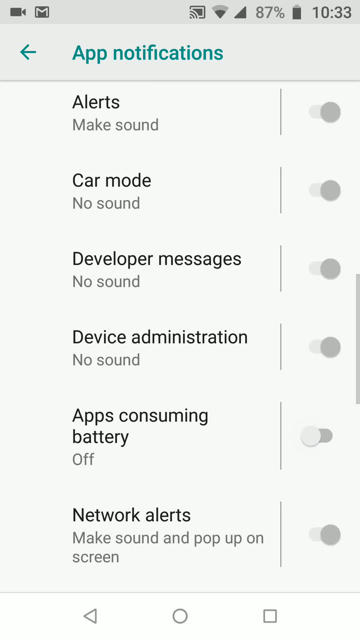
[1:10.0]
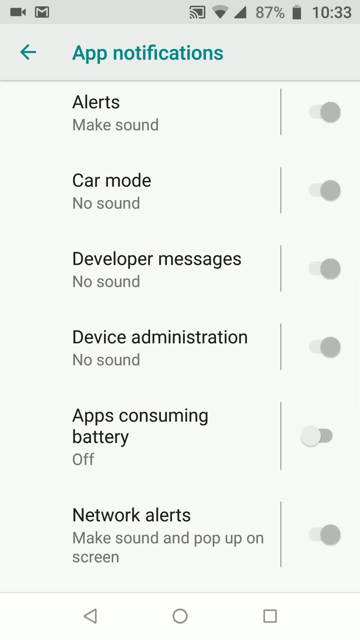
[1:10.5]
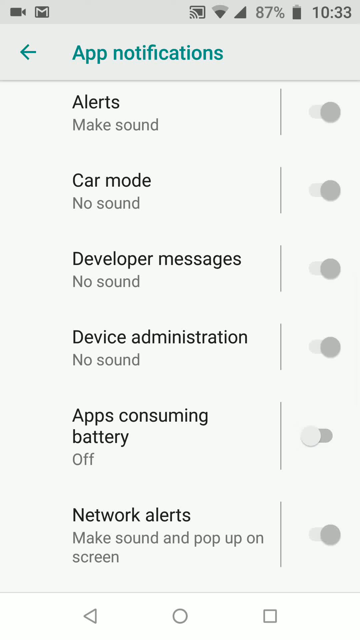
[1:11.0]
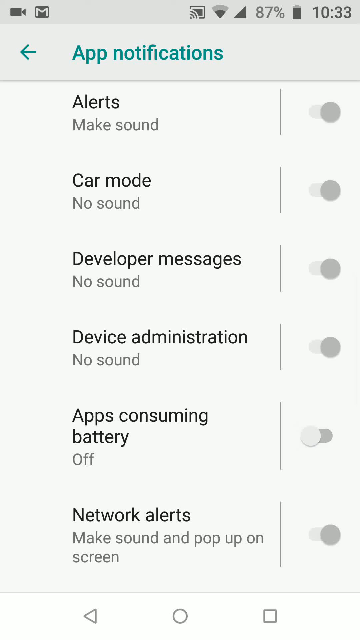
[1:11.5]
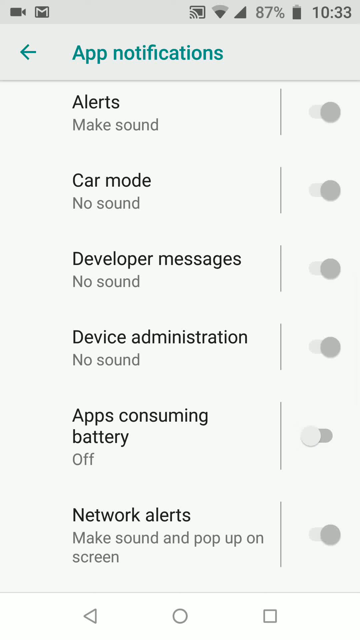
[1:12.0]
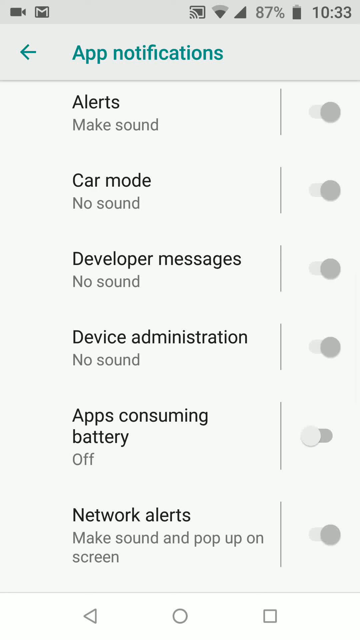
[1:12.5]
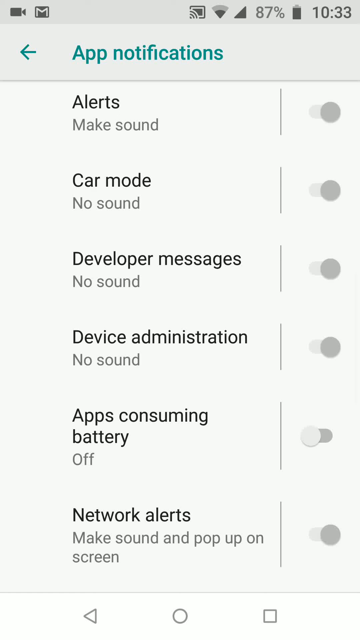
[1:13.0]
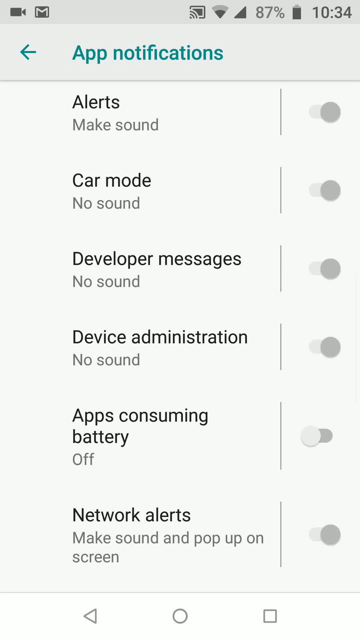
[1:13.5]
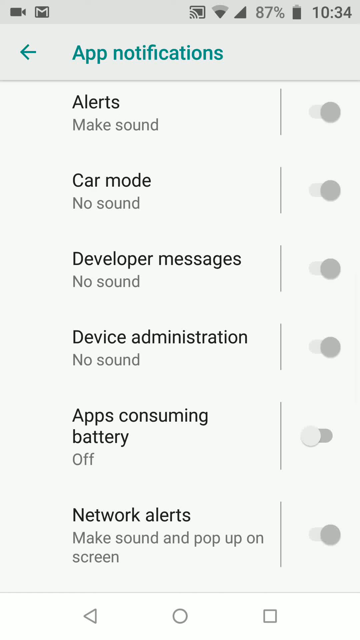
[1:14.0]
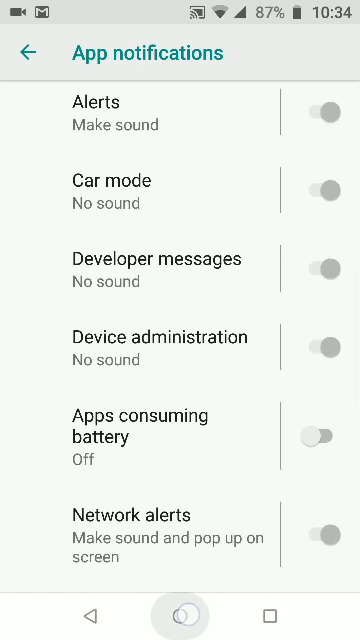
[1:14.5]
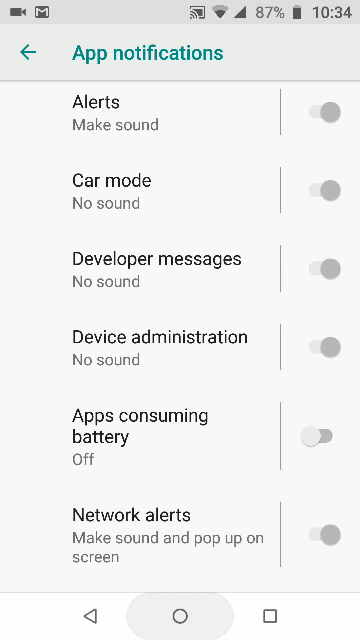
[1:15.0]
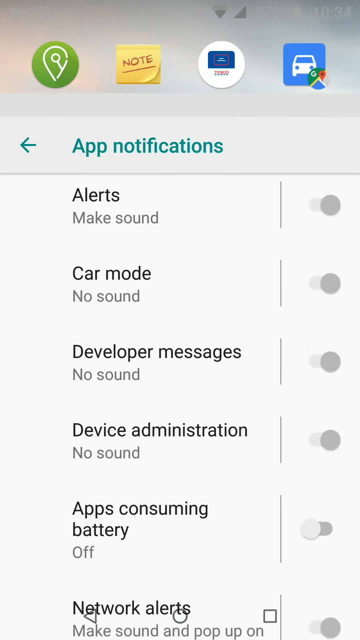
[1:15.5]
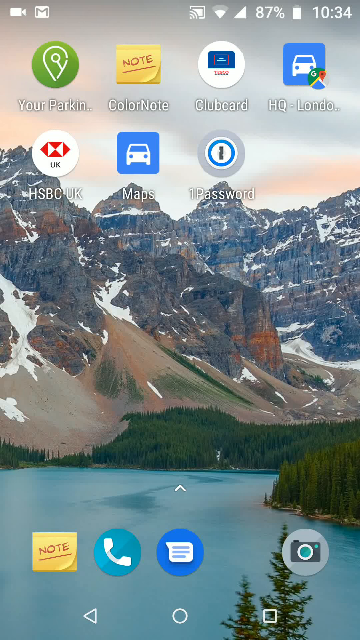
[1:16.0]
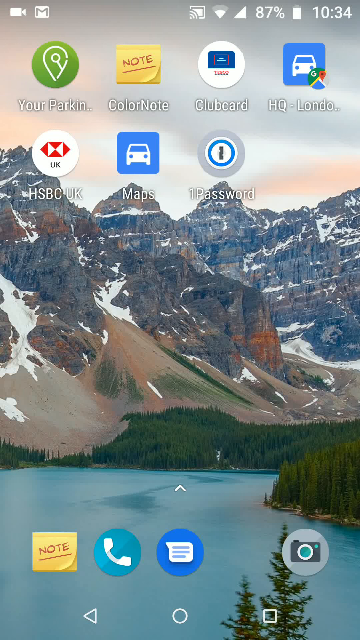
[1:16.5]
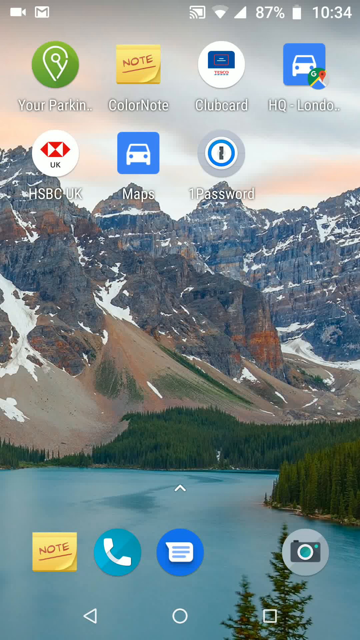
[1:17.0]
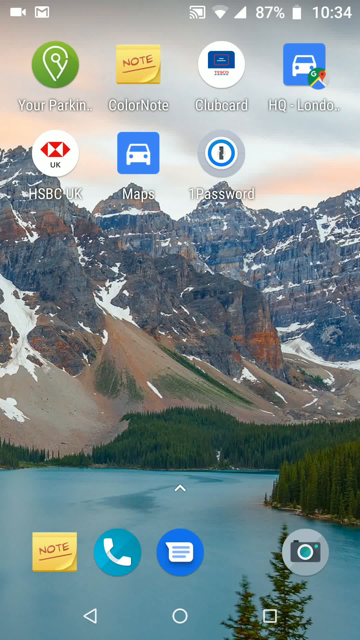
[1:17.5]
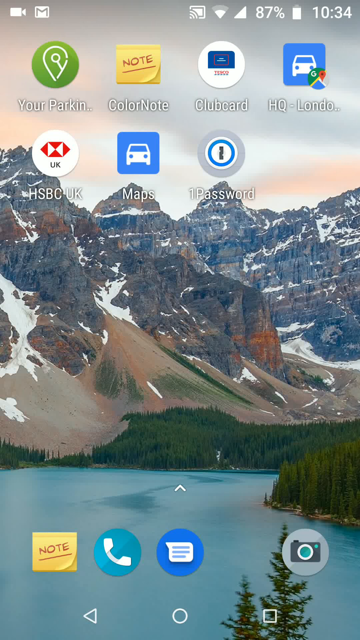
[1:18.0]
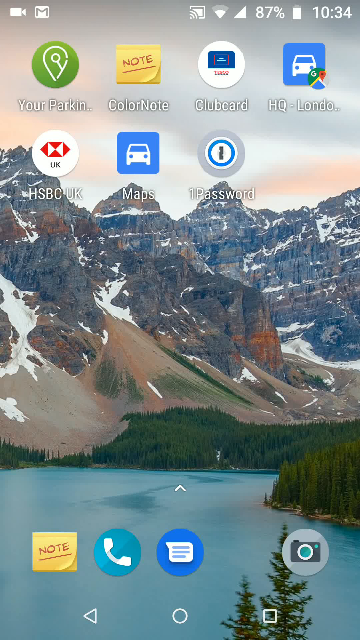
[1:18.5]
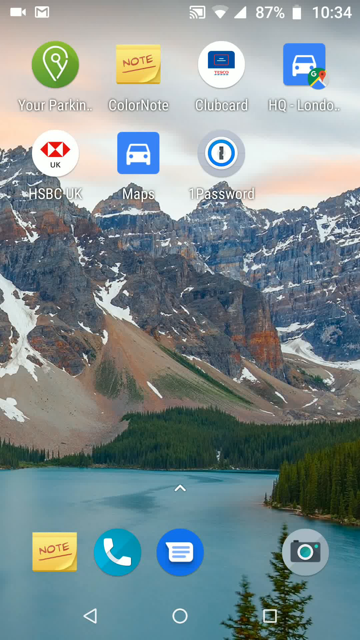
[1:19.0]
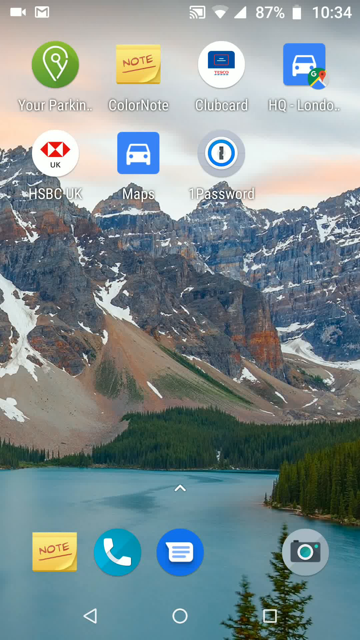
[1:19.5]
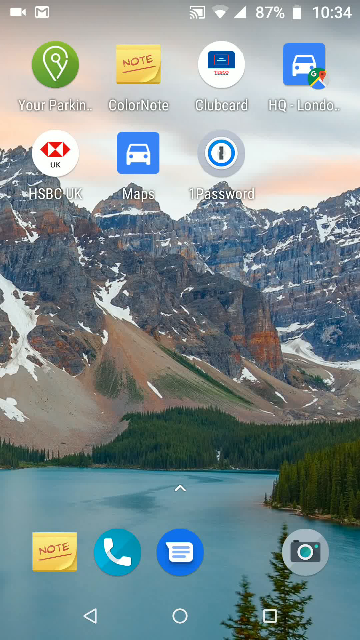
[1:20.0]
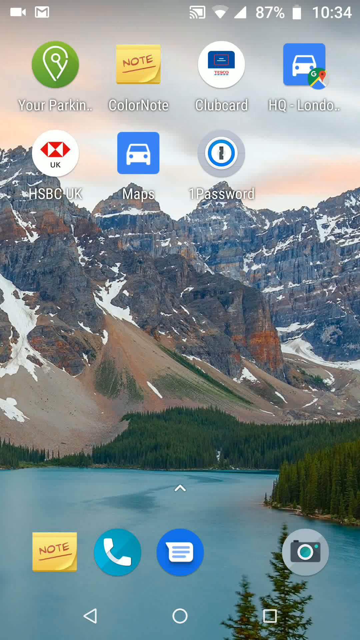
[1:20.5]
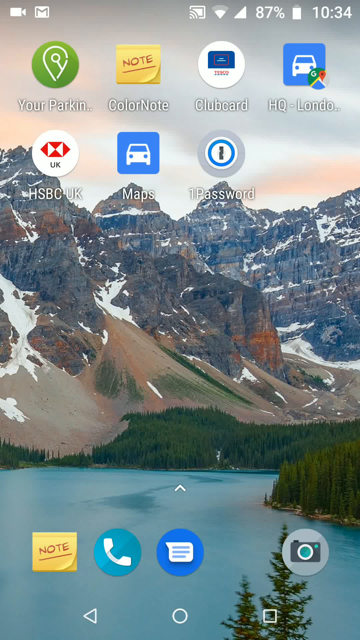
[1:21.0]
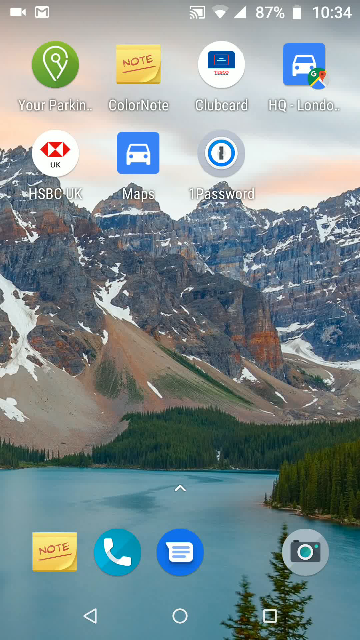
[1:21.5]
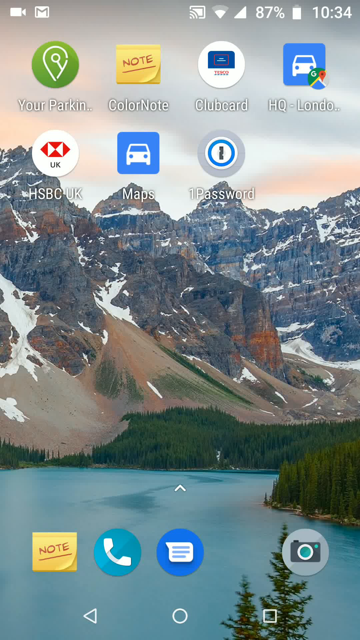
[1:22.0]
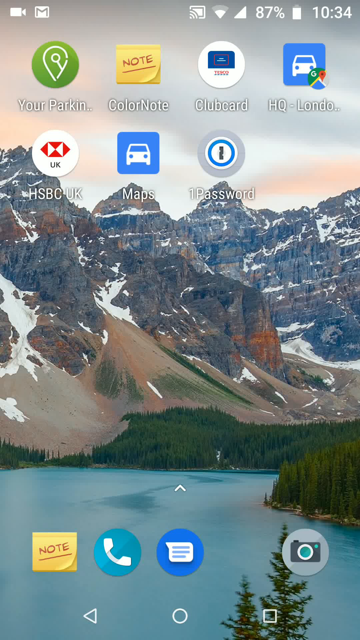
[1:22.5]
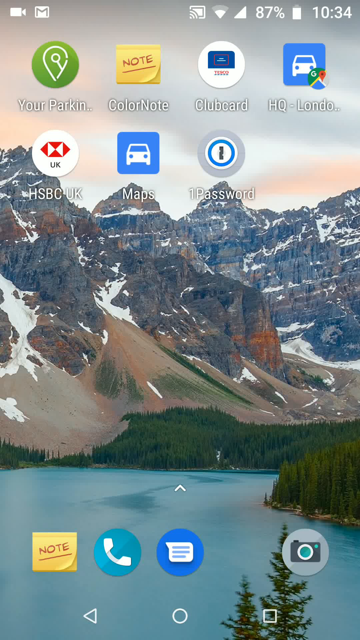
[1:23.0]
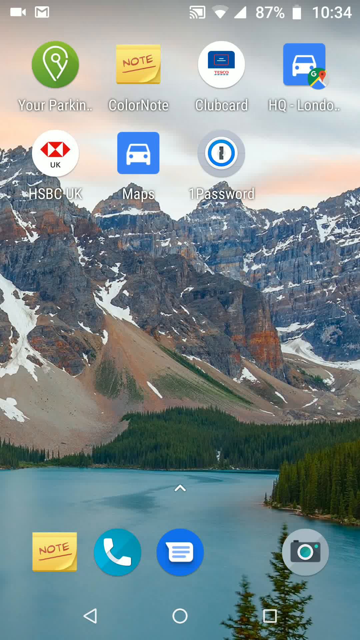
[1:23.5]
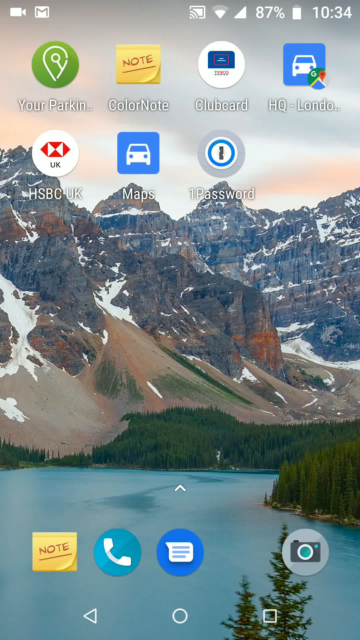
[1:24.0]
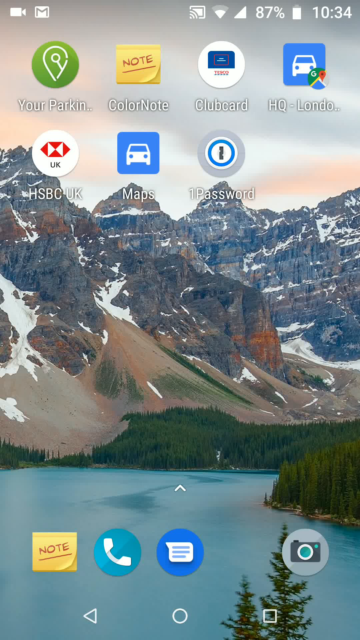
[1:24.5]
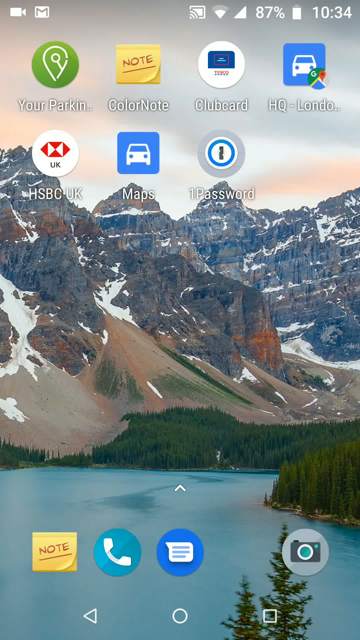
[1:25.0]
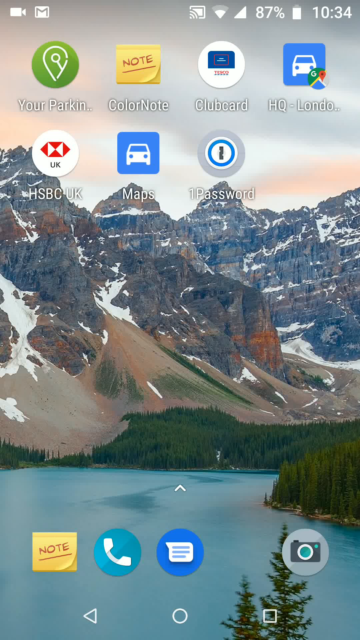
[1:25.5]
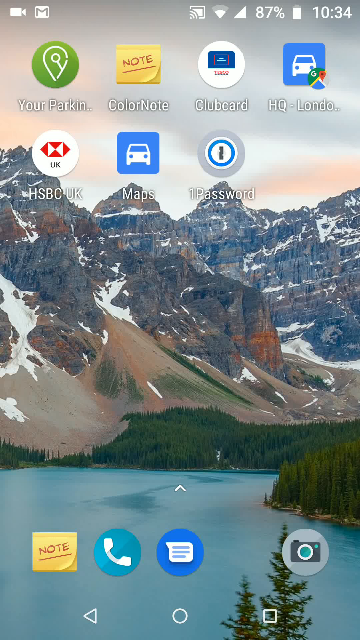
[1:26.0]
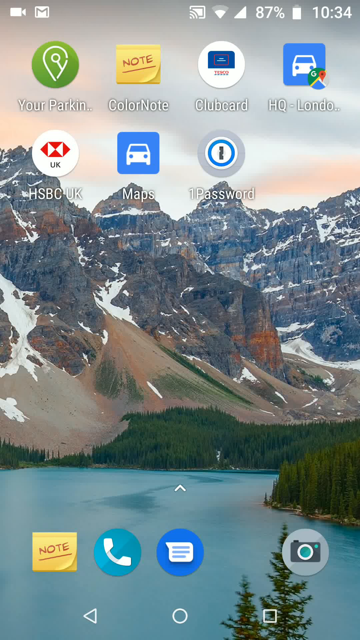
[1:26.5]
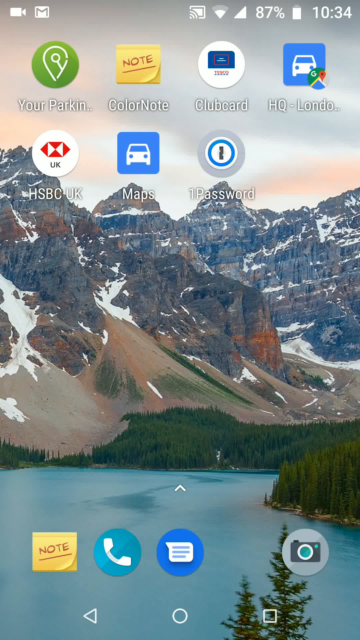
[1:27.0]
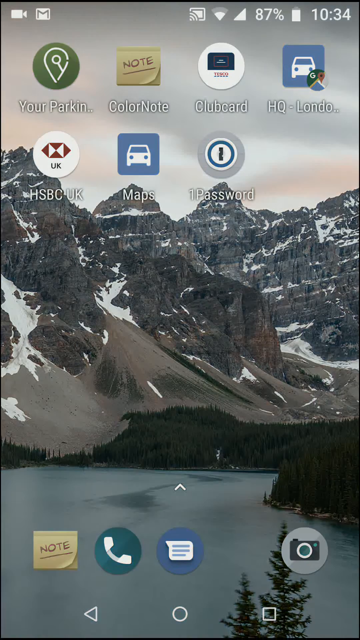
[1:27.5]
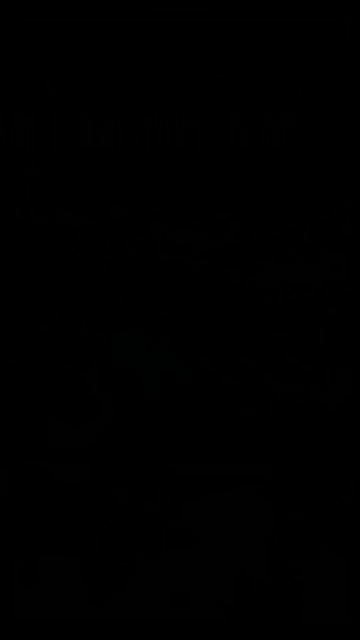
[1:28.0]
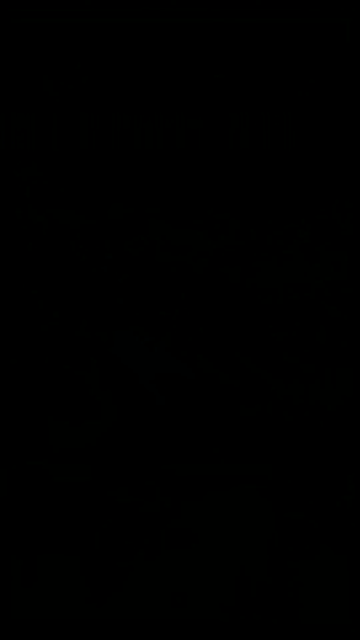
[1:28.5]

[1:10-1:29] After finishing, the user closes the settings app and returns to the original home screen, where the wallpaper again shows the mountains with snow, the lake, and the trees near the lake. The screen then turns black for one or two seconds before the video ends.